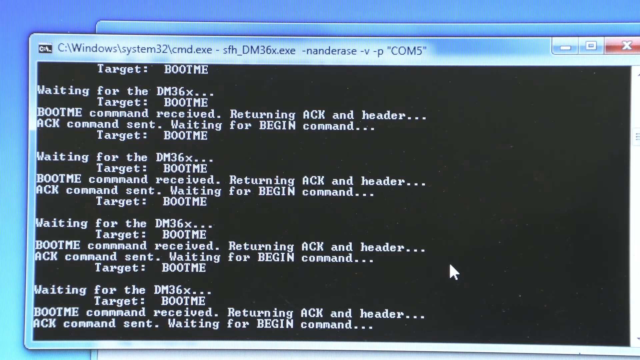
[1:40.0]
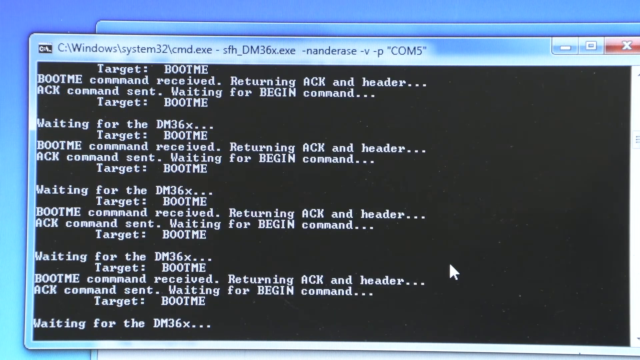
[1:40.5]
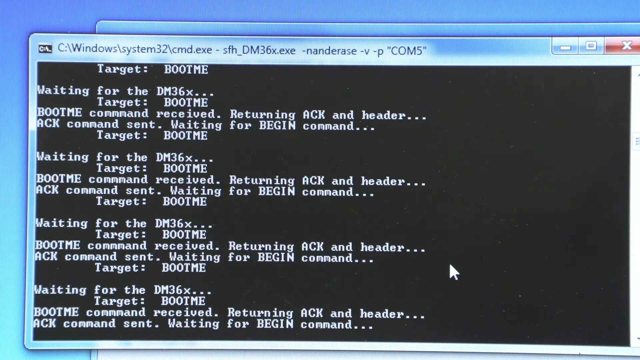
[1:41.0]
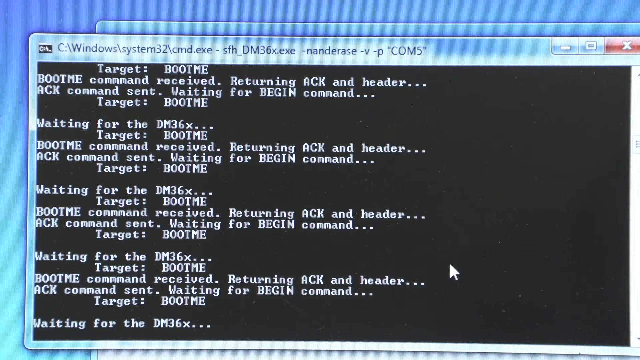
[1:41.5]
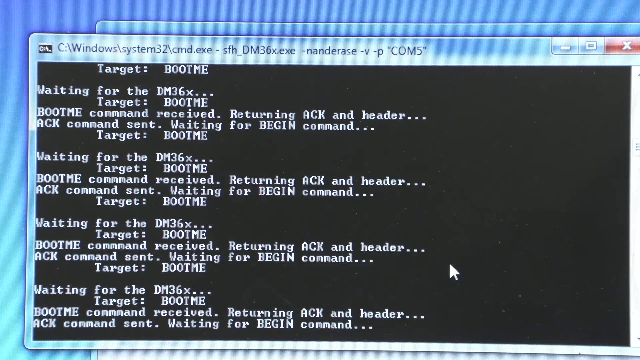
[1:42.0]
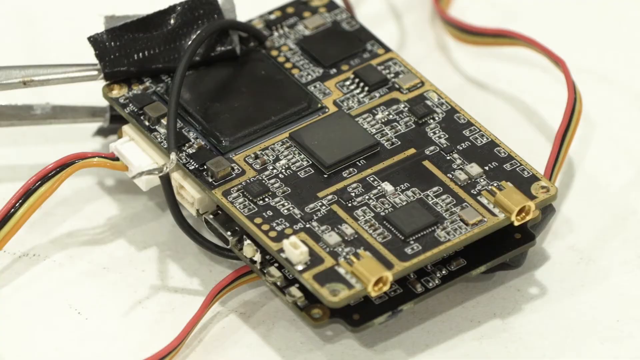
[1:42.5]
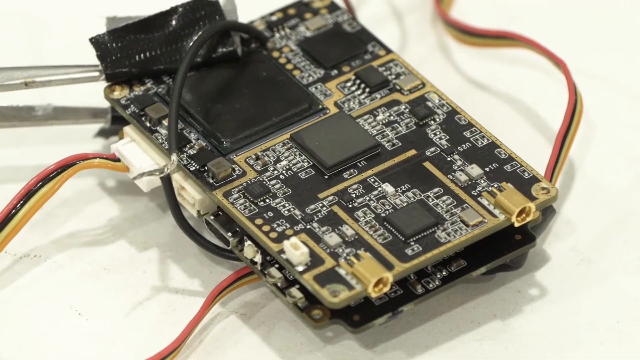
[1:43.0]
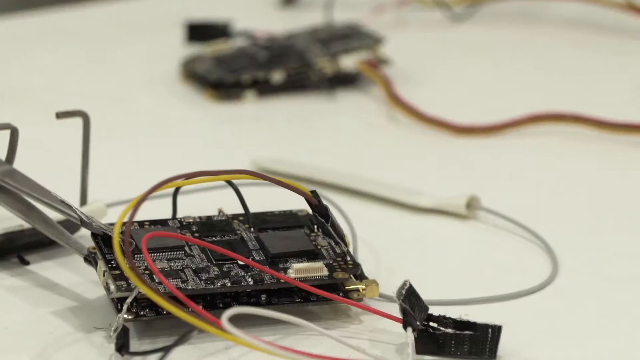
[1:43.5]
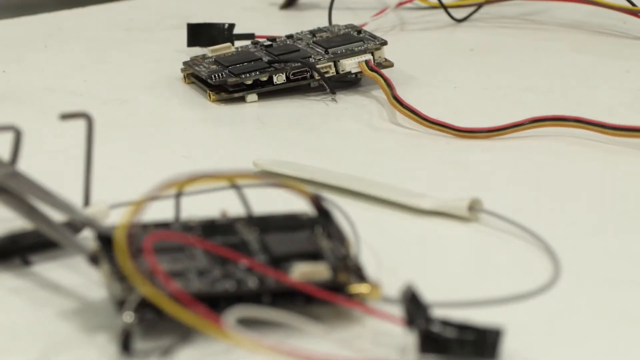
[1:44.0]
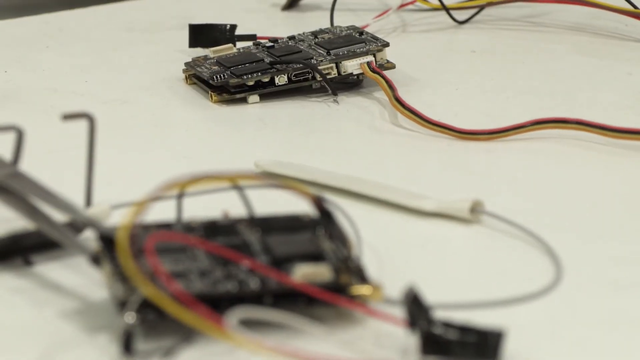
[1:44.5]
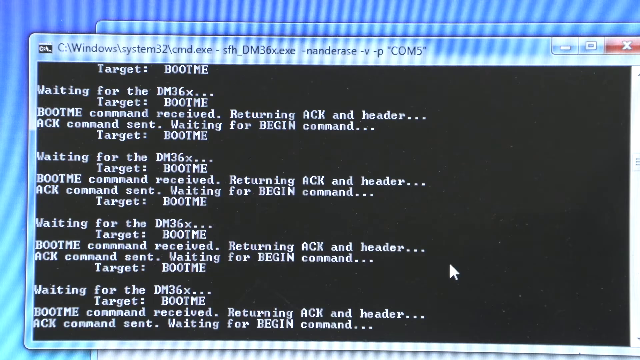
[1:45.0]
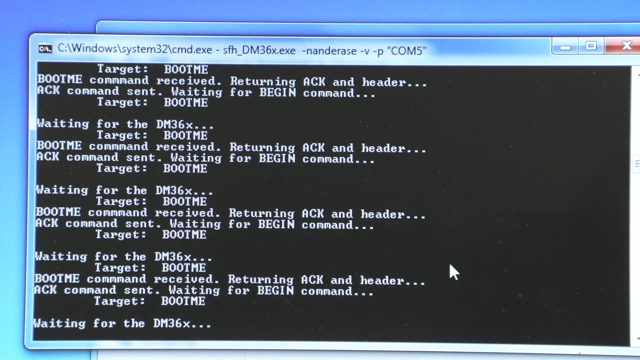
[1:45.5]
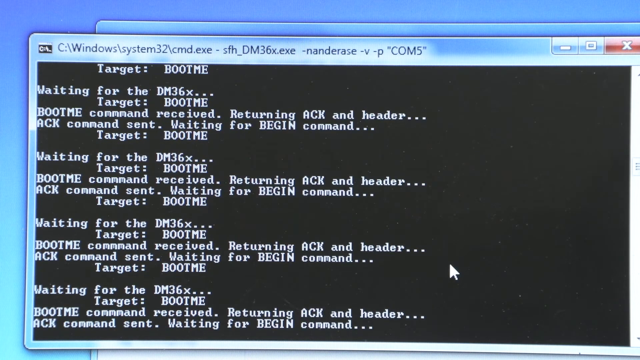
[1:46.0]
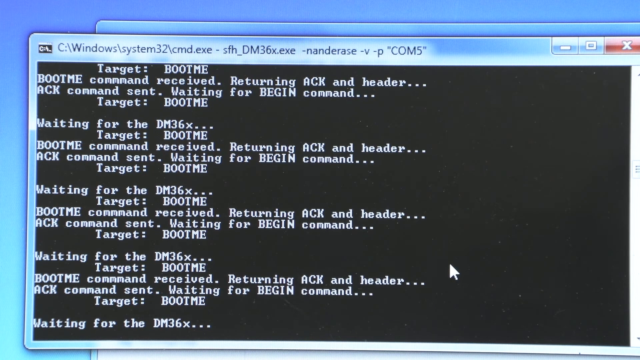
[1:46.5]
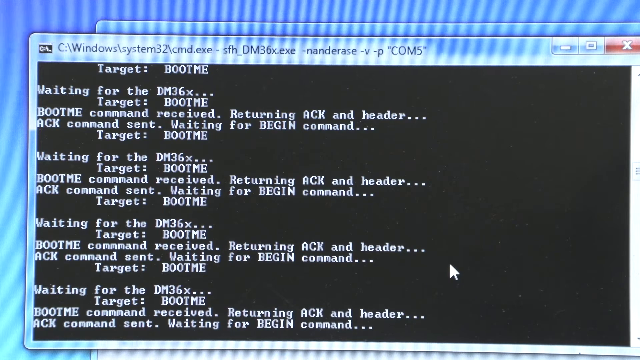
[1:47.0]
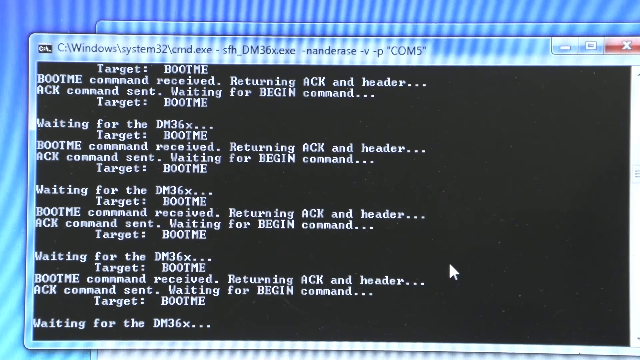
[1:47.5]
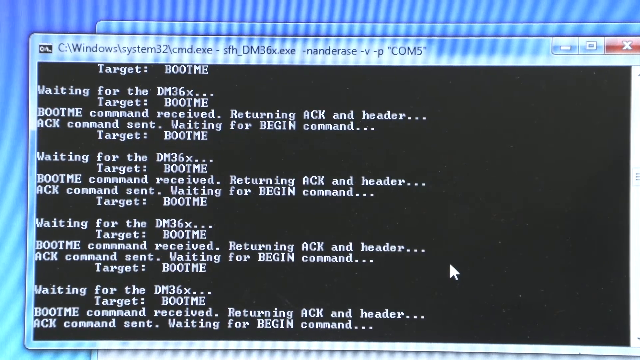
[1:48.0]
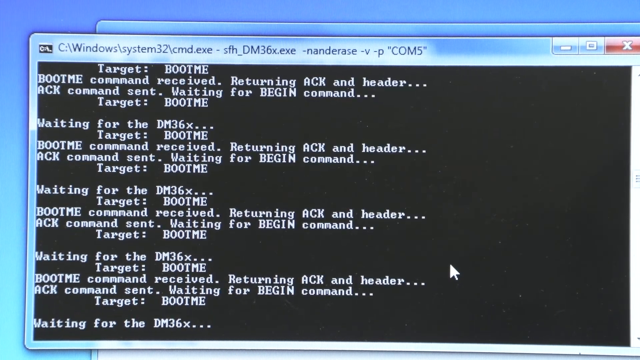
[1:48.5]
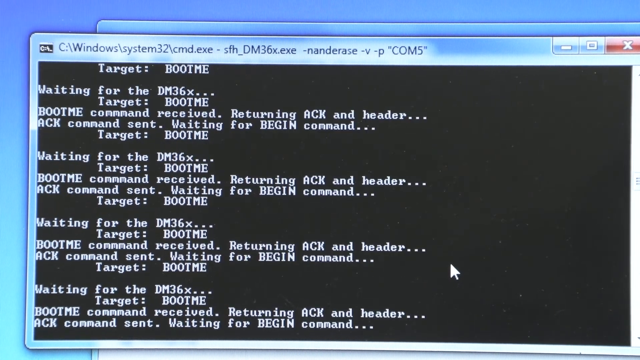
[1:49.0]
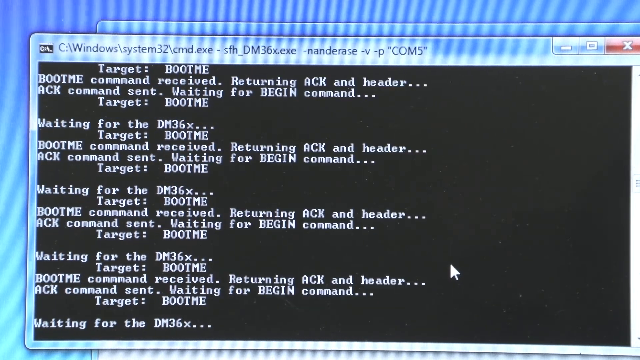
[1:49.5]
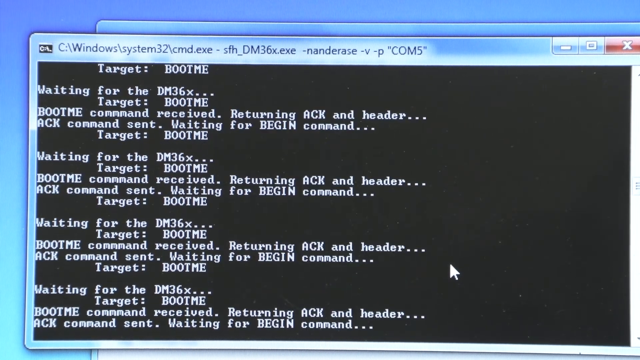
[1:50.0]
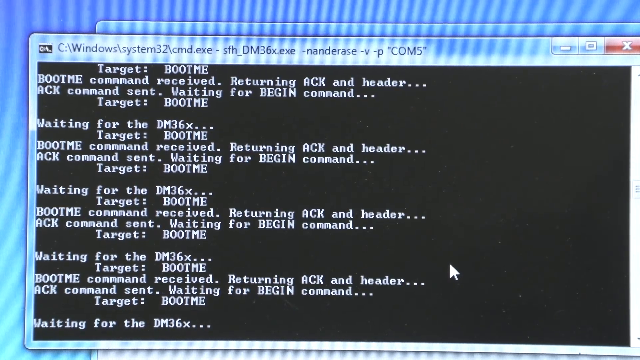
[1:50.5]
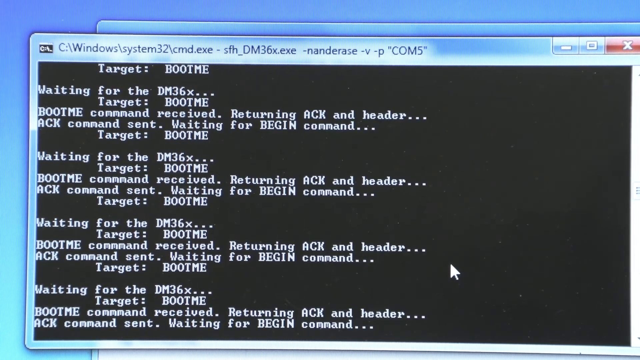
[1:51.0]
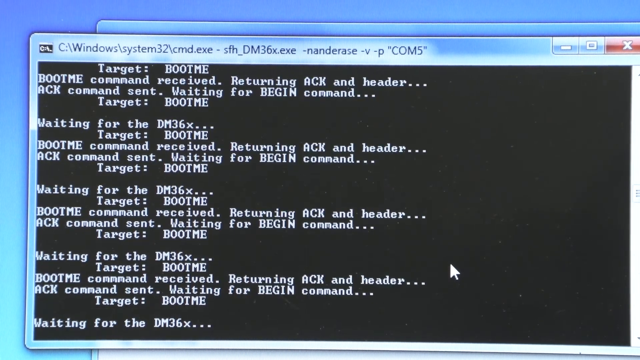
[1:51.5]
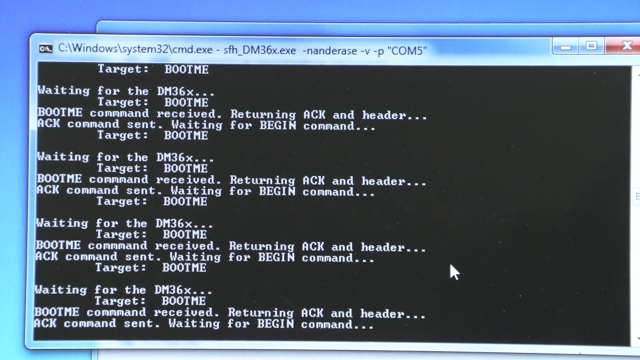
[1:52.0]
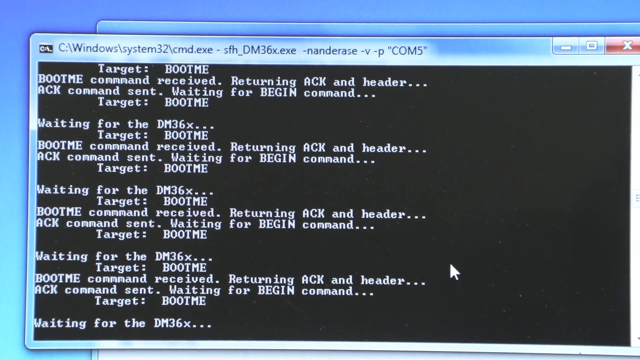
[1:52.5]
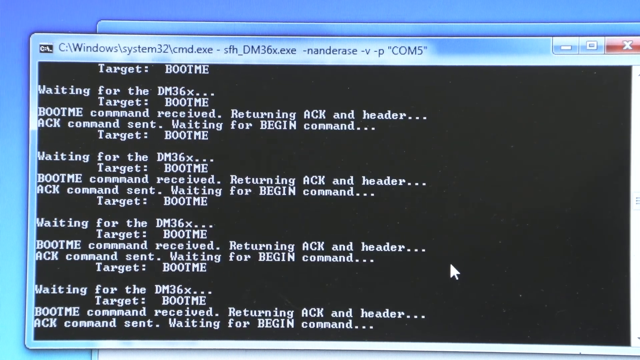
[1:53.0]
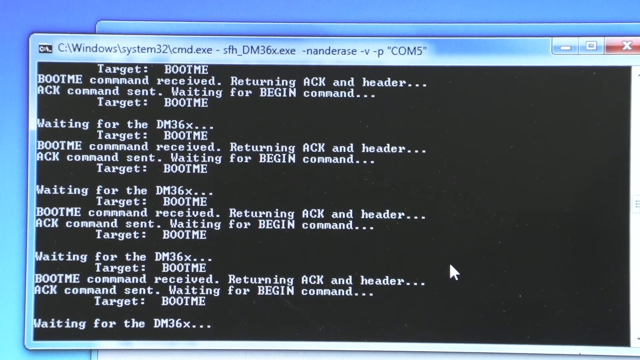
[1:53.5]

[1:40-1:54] The code box is on screen with the code loading, and the message reads "waiting for the dm36x... target bootme, bootme command received. Returning ACK and header. ACK command sent. Waiting for begin command... target bootme." The video then flashes to a computer chip with some yellow and red wires protruding from it. Two computer chips are shown on a small table, one in the near foreground and one, less clear, in the background. The lines of code then appear again, scrolling down and showing the message repeatedly.